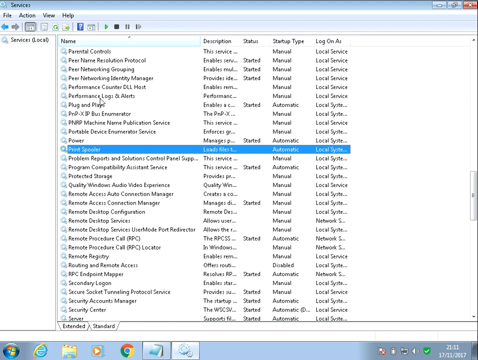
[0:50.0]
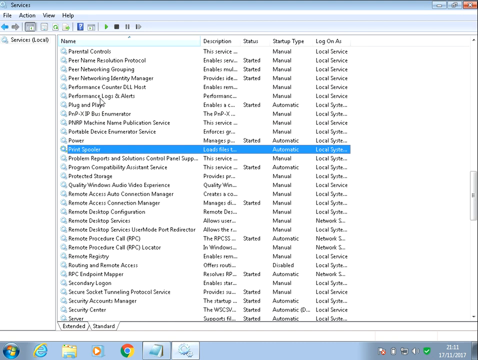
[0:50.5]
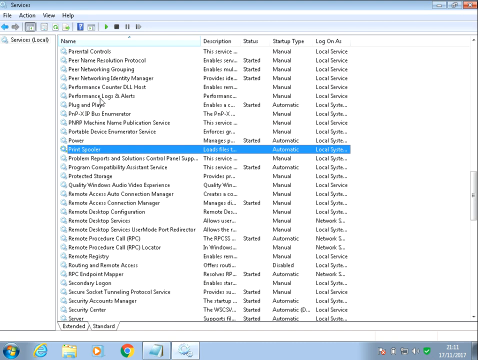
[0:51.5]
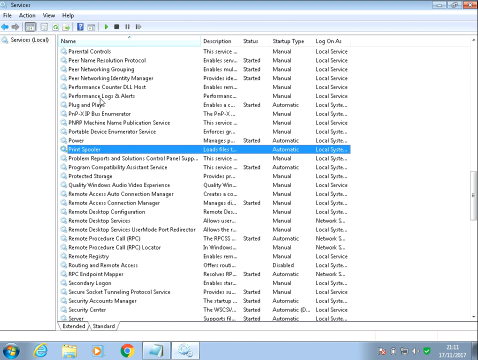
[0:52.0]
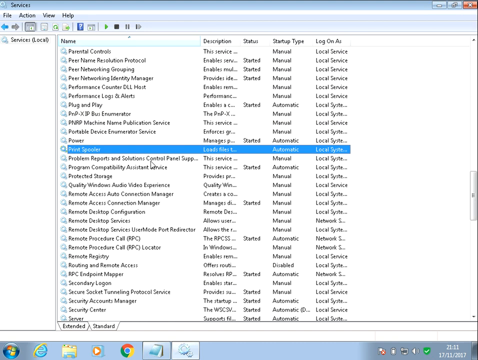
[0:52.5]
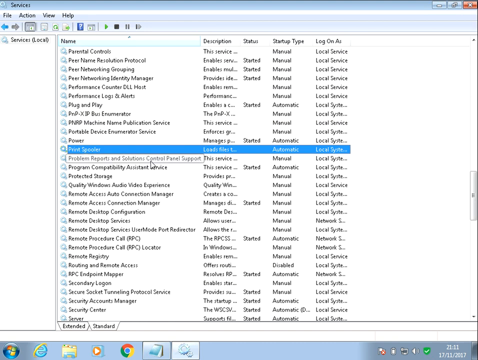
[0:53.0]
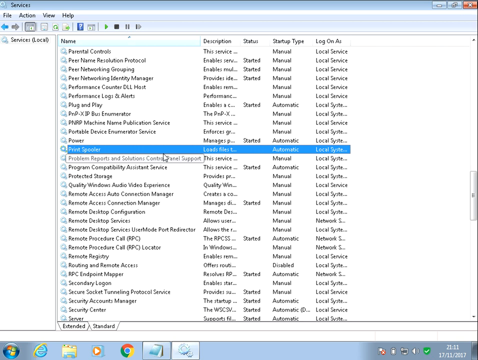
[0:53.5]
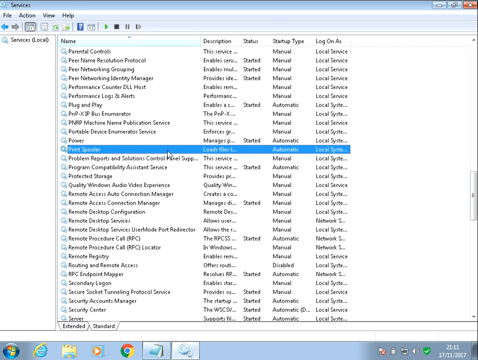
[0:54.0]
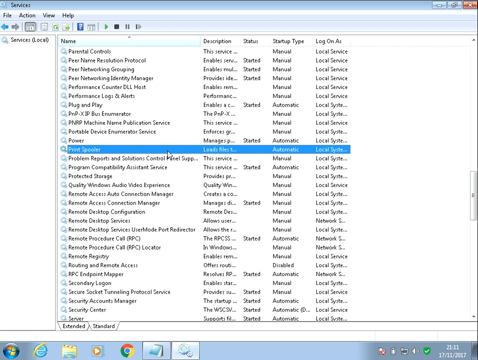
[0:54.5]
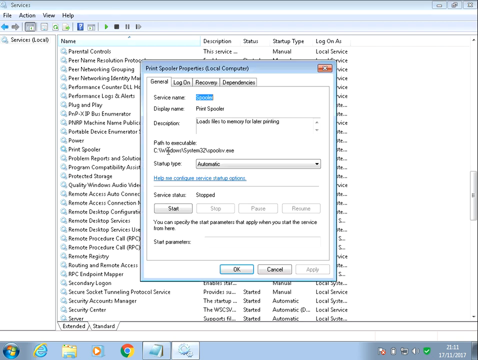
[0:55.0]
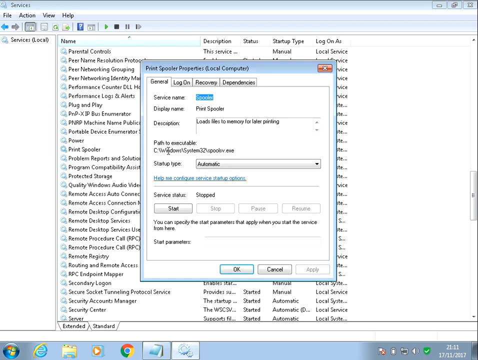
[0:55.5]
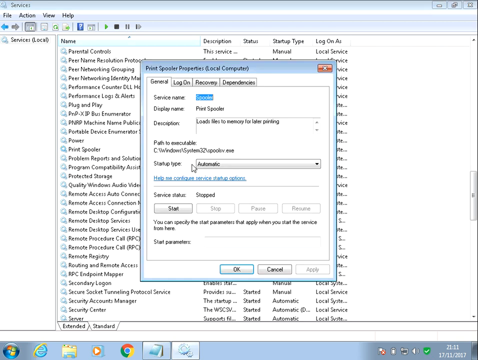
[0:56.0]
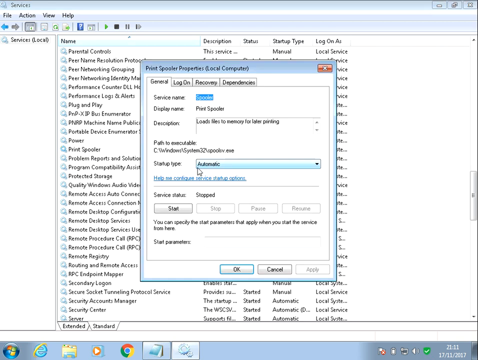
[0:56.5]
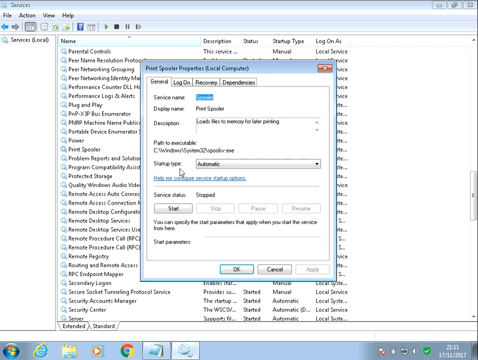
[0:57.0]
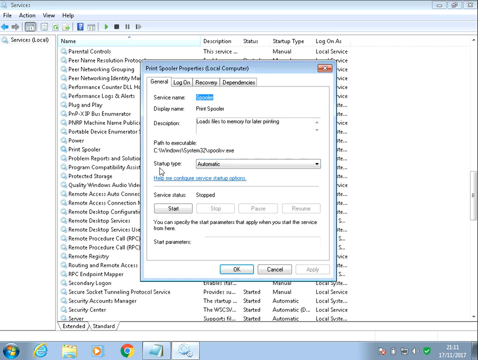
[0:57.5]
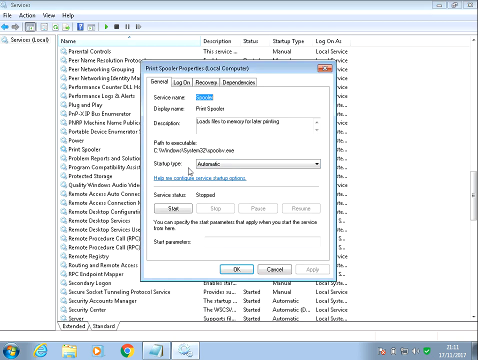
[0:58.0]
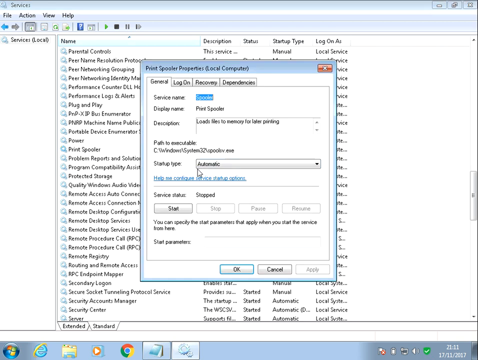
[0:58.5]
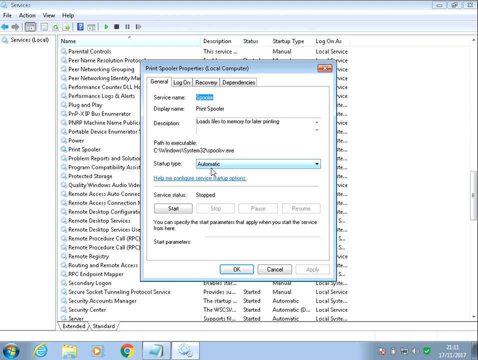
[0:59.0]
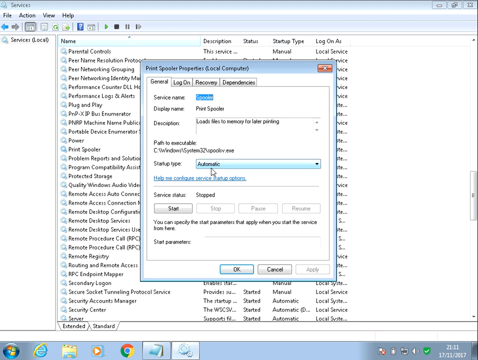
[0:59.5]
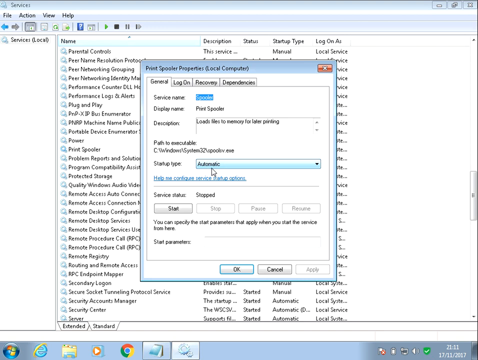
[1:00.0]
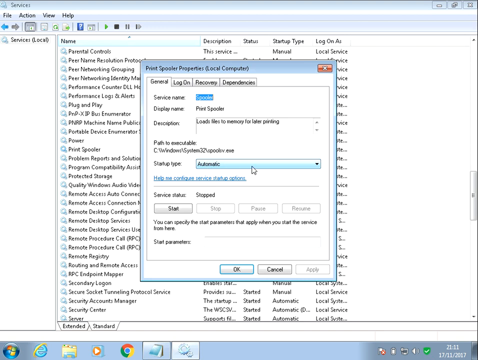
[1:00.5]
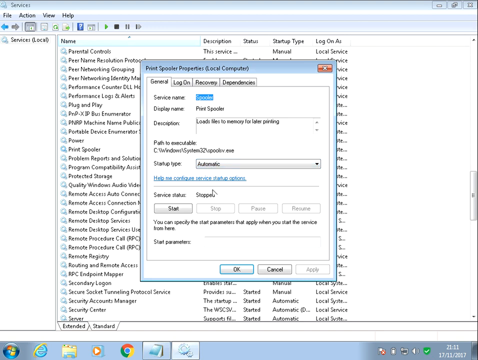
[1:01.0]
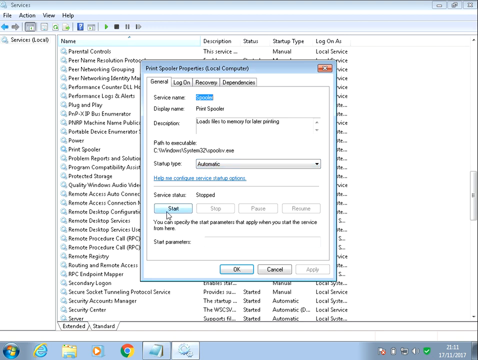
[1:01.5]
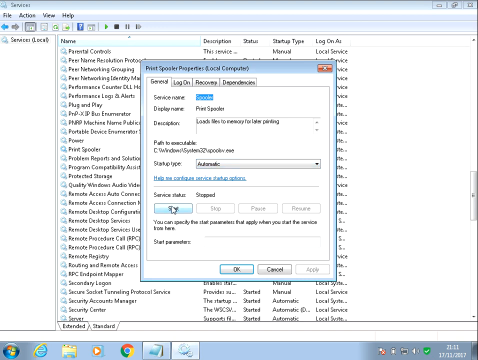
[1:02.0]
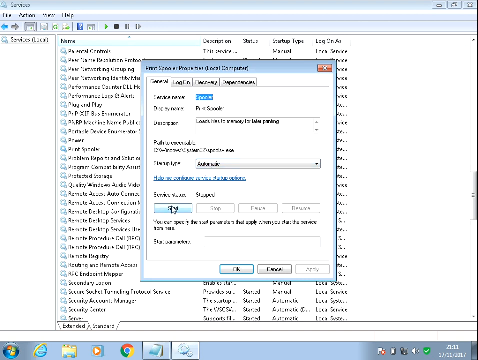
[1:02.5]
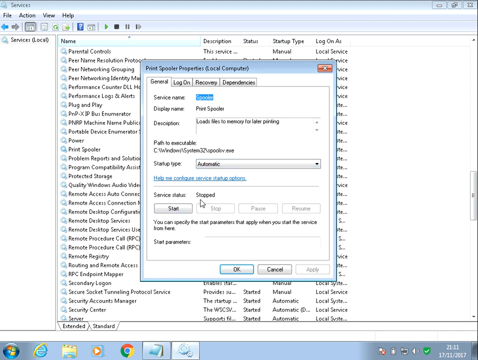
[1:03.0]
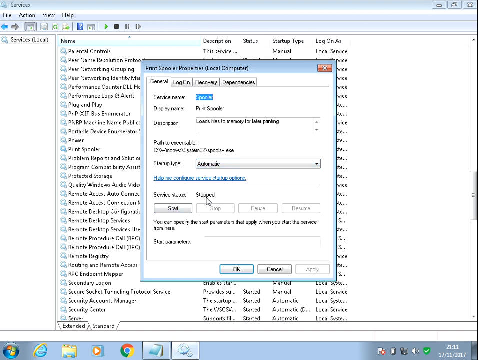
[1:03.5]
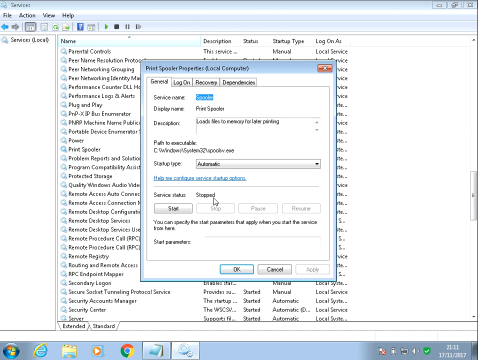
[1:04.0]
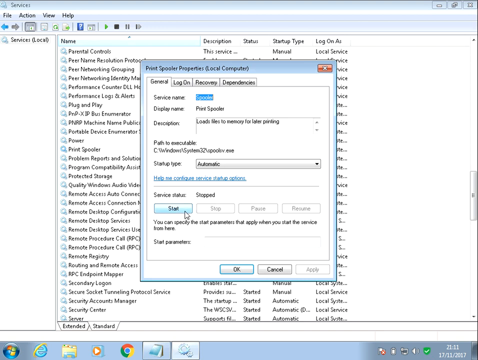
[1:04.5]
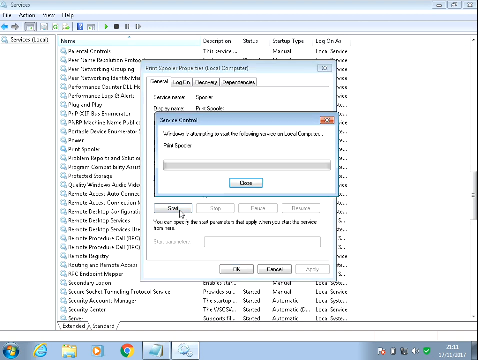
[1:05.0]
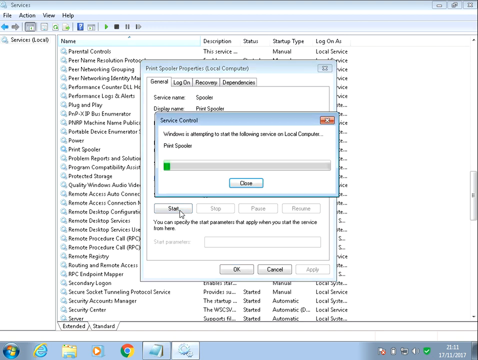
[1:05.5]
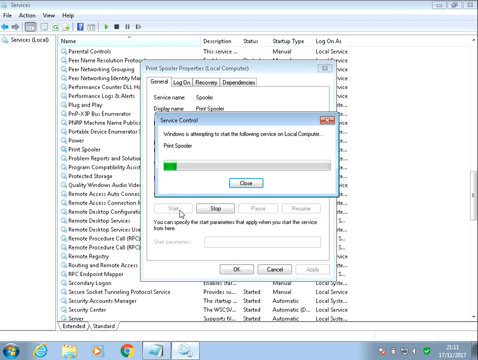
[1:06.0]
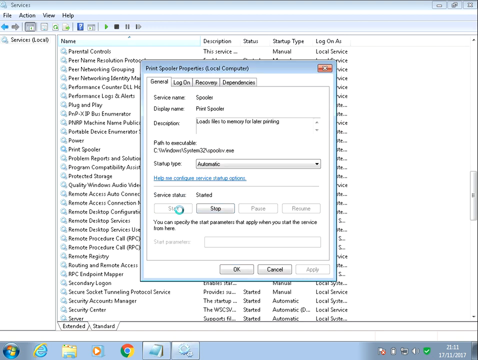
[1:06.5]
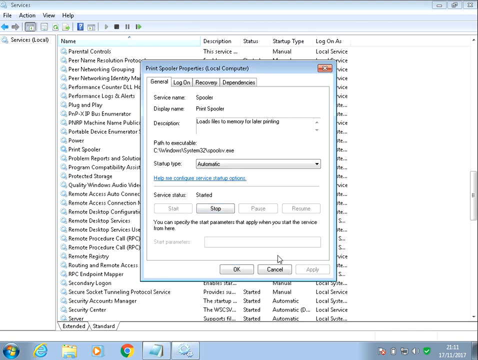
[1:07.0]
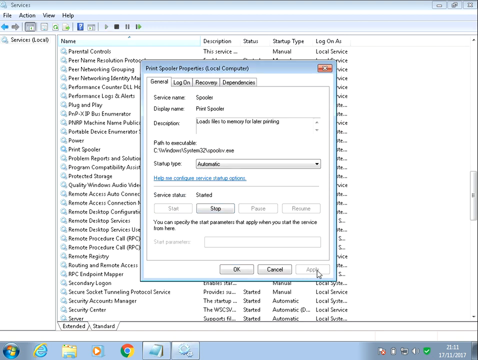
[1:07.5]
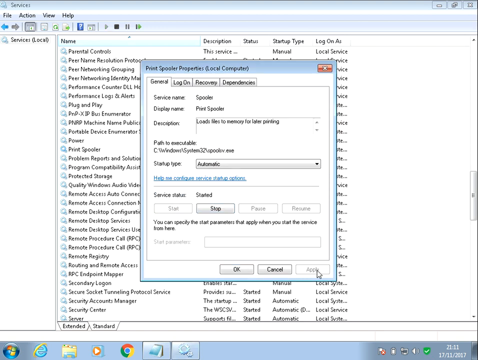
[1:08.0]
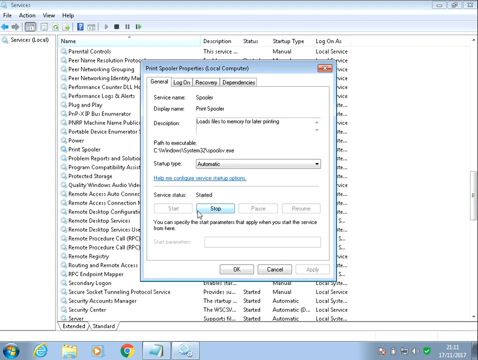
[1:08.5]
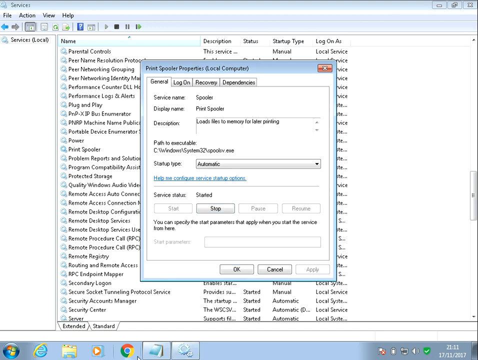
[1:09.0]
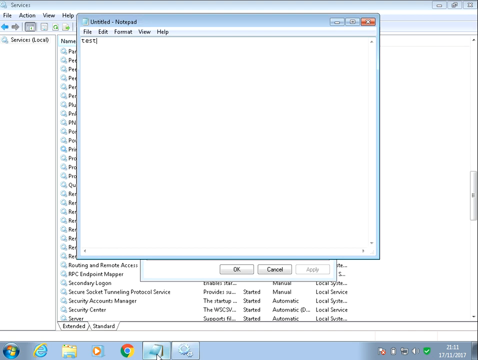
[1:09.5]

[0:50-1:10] The frame is ever so slightly wider than it is tall. The Services window is open within Windows, with "services" in the upper left. Below that, the main area holds a long list of services, probably somewhere around 30 in total. The user clicks one and opens it, and a pop-up appears titled "print spooler properties" with "local computer" in parentheses. It is on the General tab, with other tabs such as Logon, Recovery and Dependencies. Below is text labeled "service name" whose value cannot be read. A little further down is the Startup label; the mouse moves to the right of it, to the drop-down box, which is currently set to Automatic. The user then goes down to a button below and to the left and clicks Start, and a window pops up with a small load bar that fills up to full.